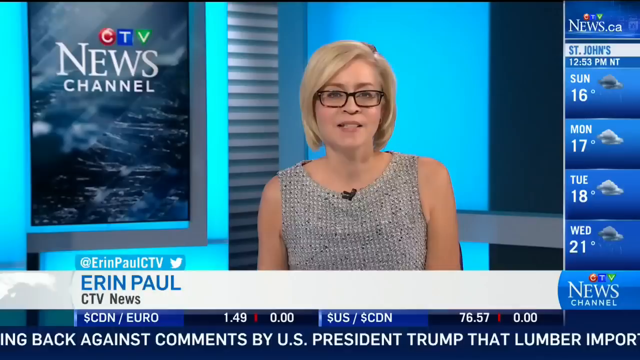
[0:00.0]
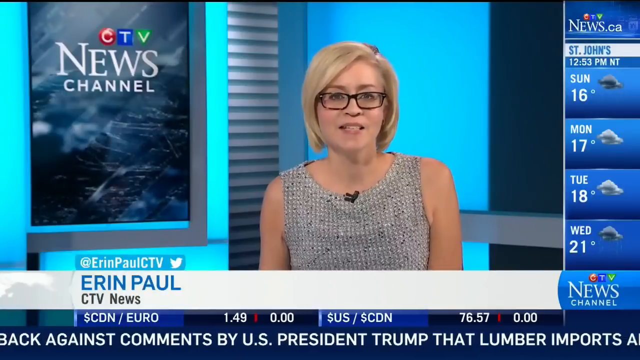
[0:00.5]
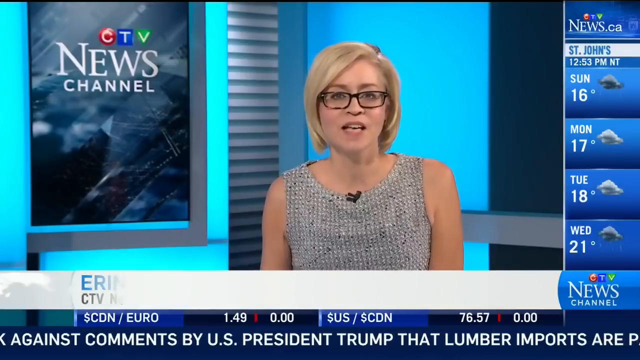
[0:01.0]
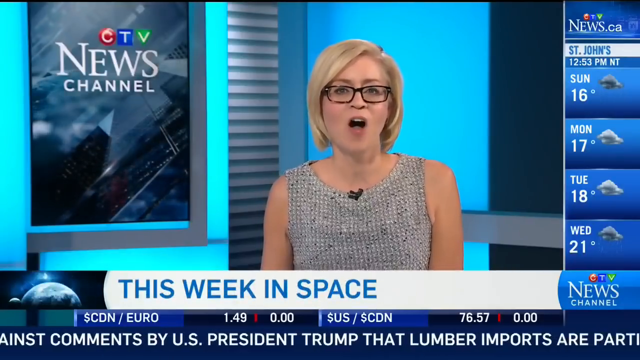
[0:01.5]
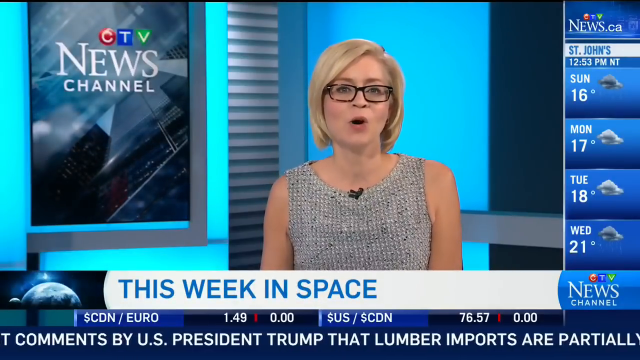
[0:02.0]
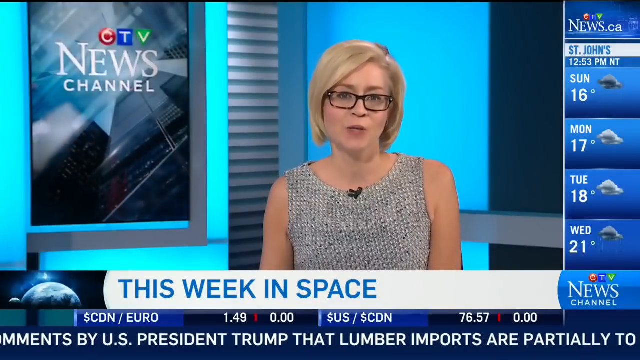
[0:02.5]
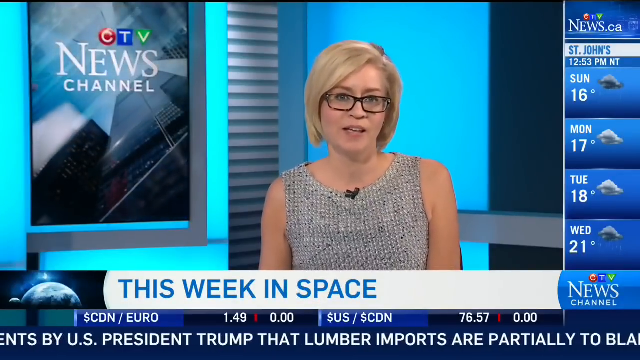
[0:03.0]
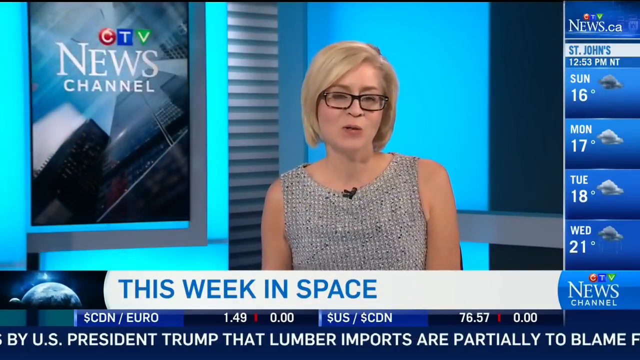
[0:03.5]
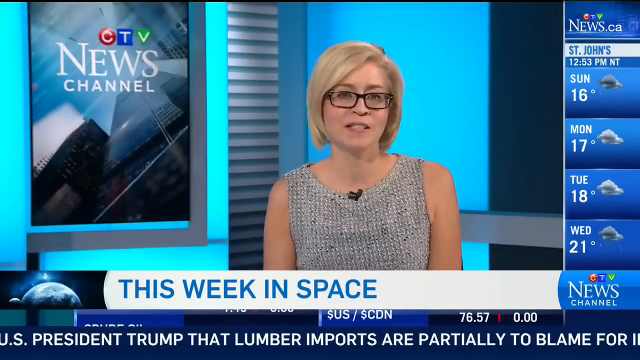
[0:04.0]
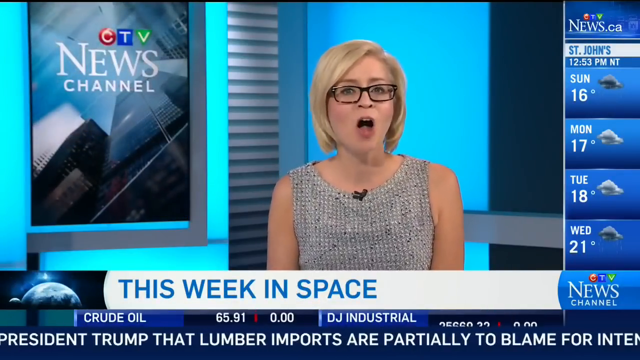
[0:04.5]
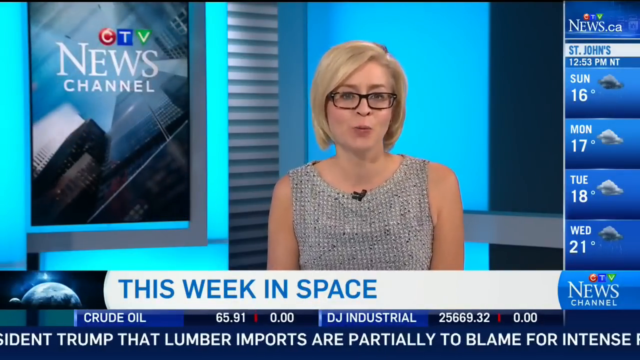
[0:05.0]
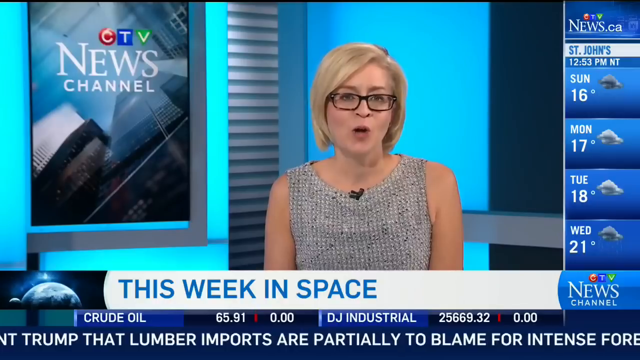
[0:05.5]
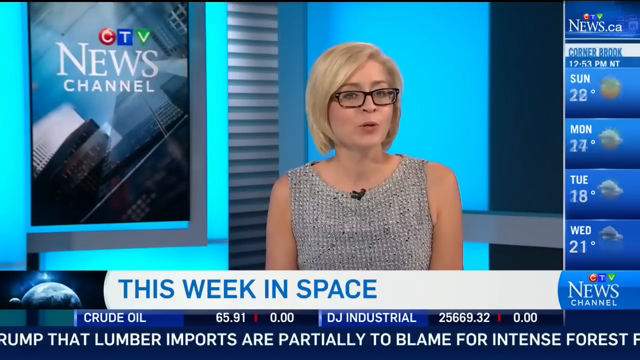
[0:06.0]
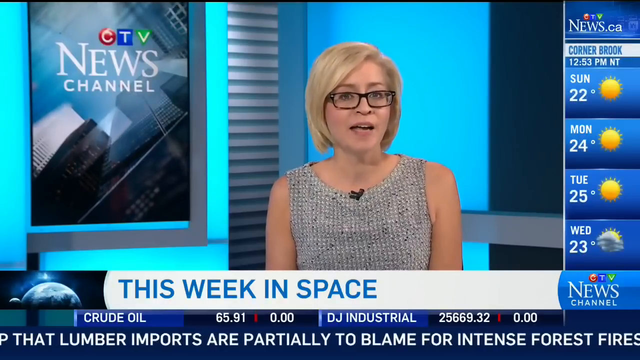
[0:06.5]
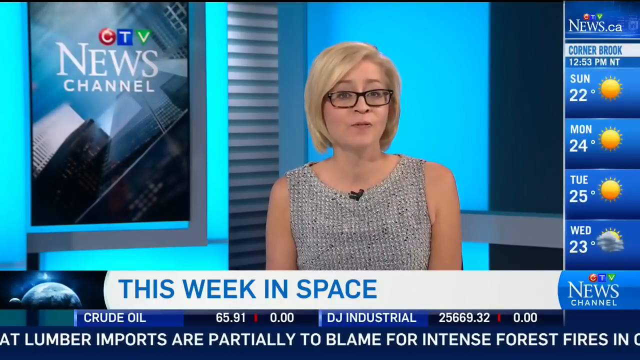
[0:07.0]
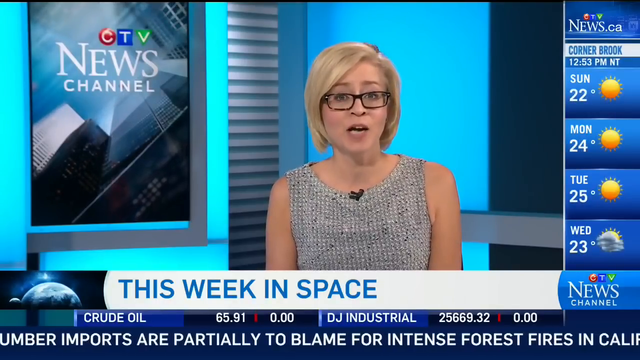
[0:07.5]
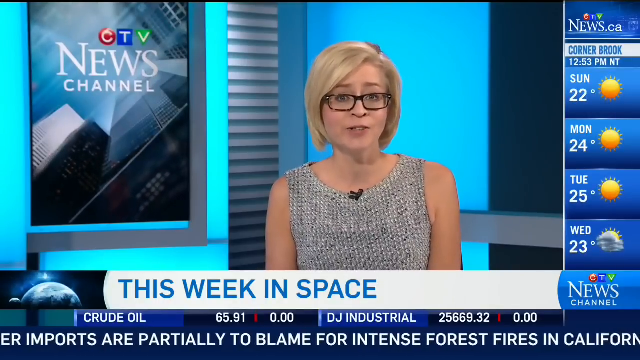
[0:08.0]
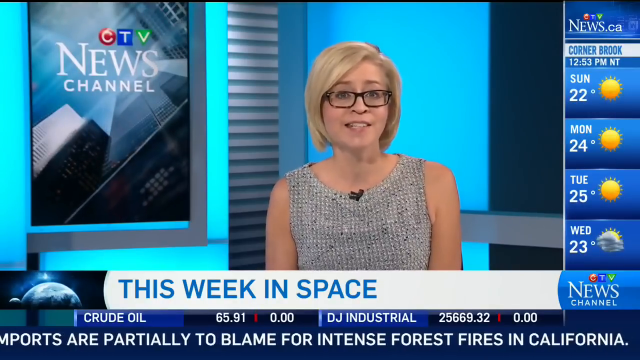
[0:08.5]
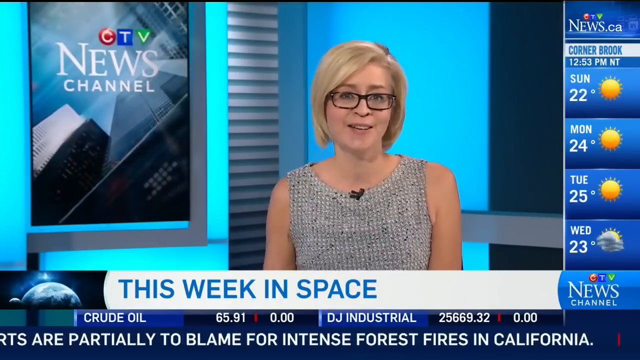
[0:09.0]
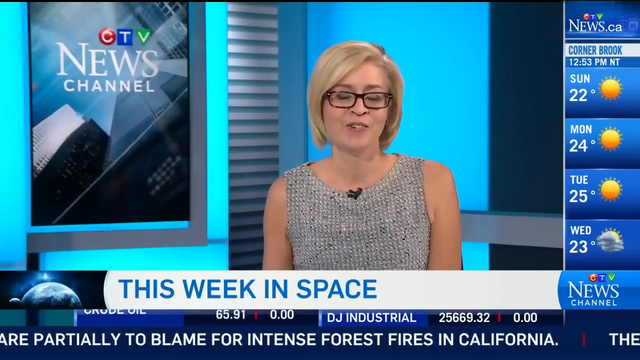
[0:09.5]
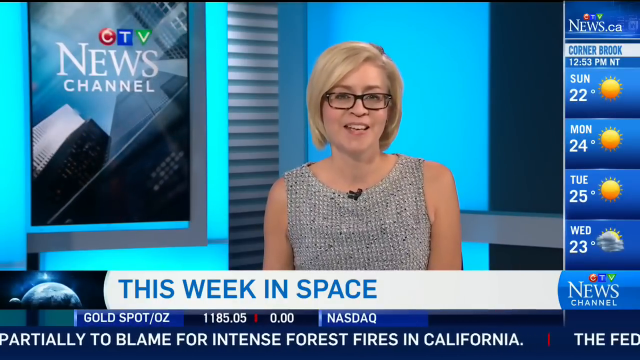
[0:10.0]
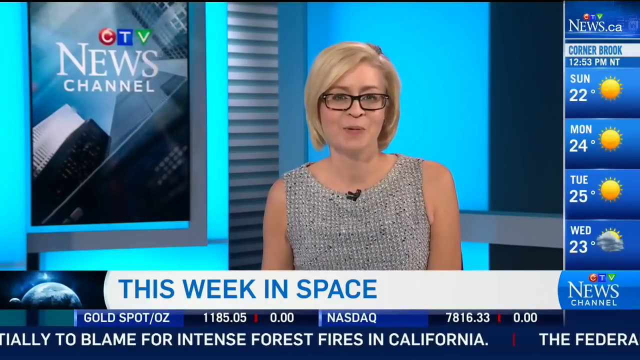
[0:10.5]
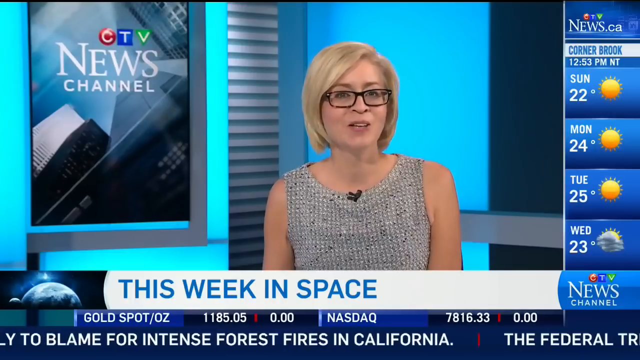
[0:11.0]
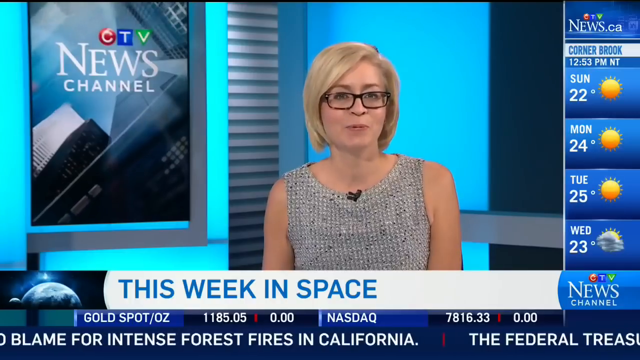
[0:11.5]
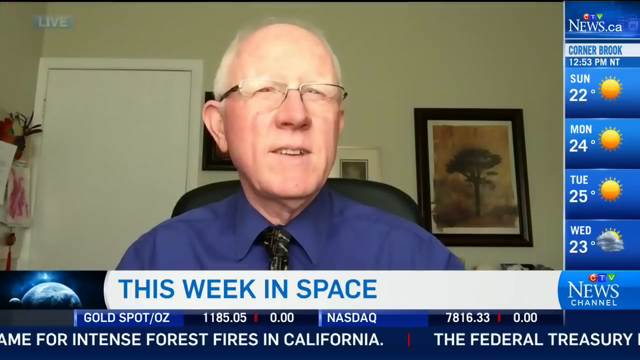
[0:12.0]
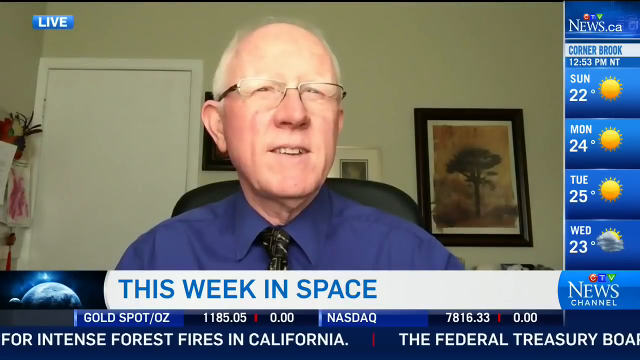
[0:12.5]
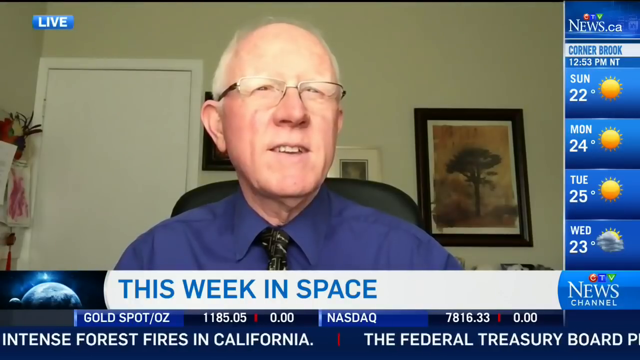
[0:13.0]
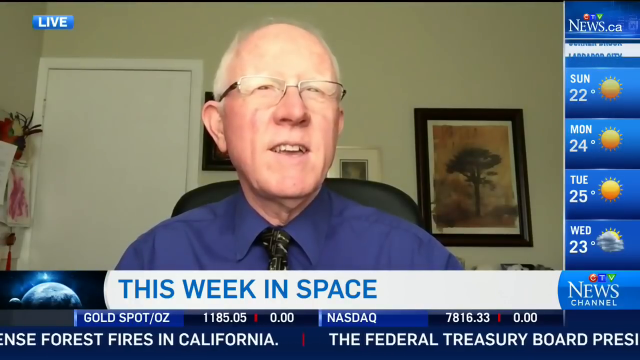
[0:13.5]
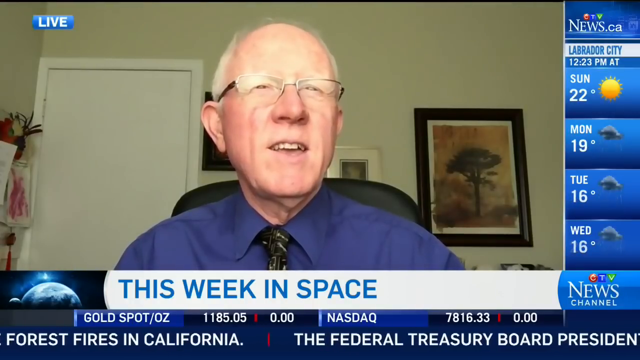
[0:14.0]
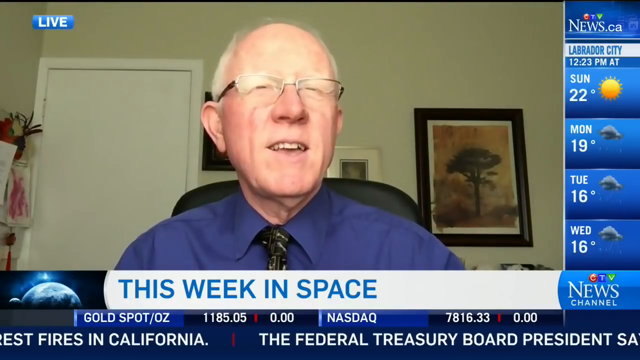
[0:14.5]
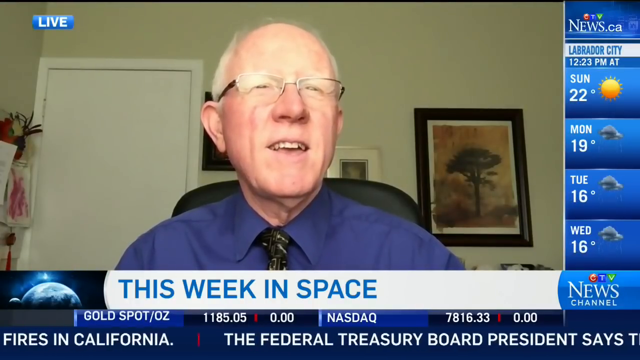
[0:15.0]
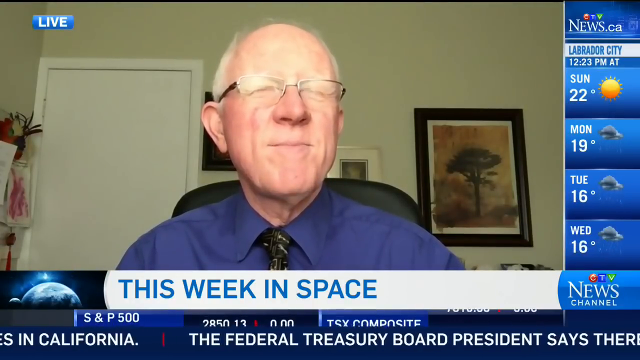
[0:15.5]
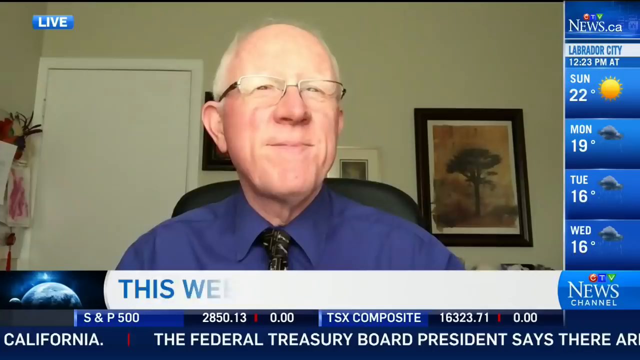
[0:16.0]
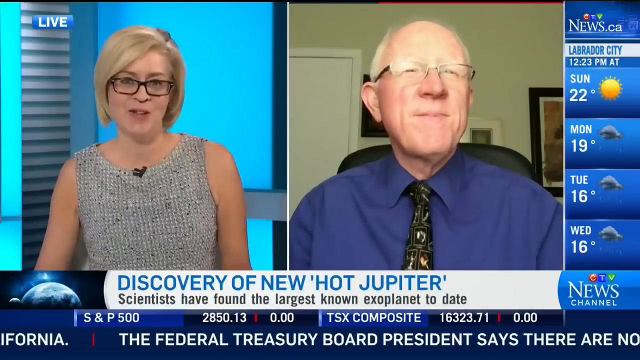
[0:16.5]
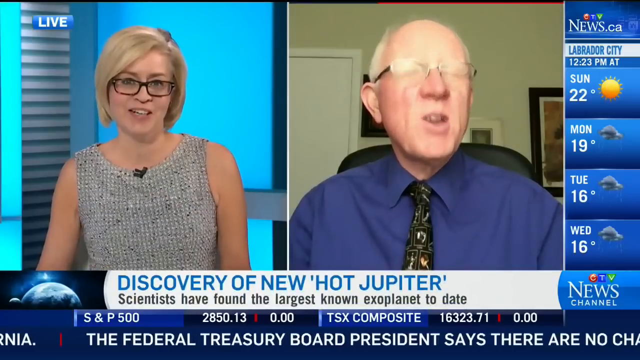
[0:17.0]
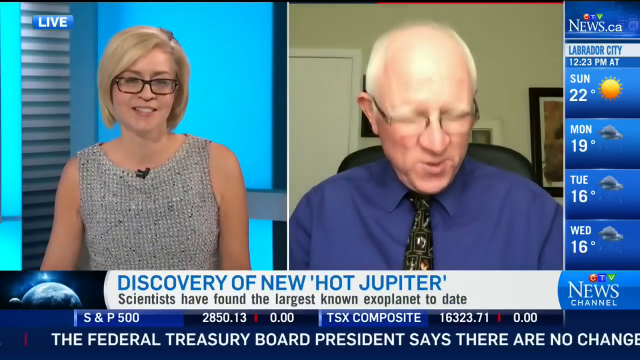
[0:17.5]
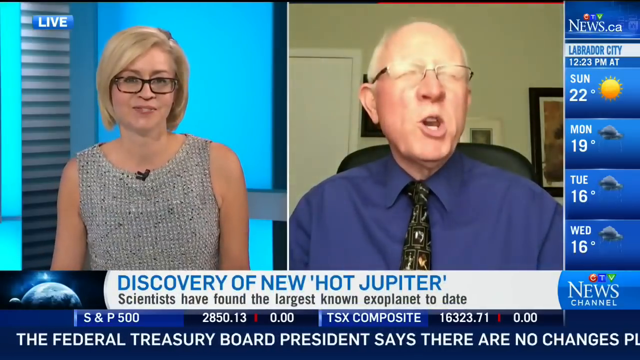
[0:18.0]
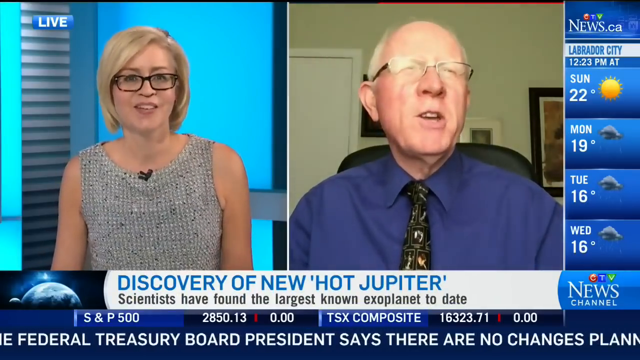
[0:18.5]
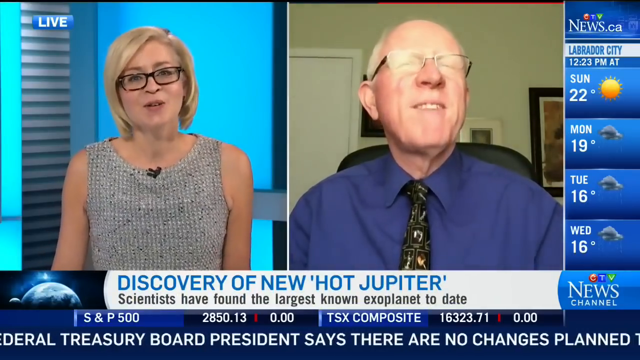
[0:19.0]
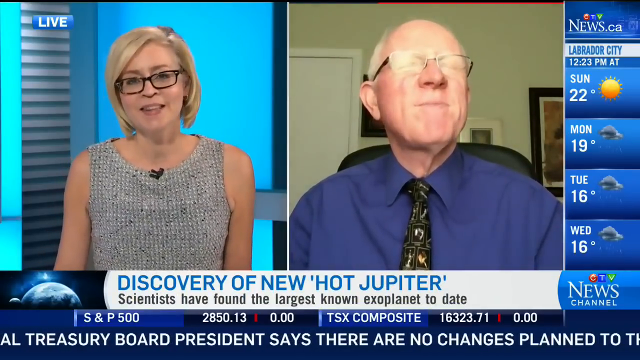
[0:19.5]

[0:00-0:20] The broadcast is CTV News Channel, with an item about this week in space. The presenter in the studio is Erin Paul, a fair-haired woman in a grey sleeveless top who wears dark glasses. A weather forecast for St. John's shows grey conditions: 16 degrees on Sunday, 17 degrees on Monday, 18 degrees on Tuesday and 21 degrees on Wednesday, all grey. The coverage returns to space, with an expert to be interviewed about the discovery of a new hot Jupiter type planet outside the solar system. A news item reports that Canadians are not happy that President Trump is alleging Canadian lumber imports are the cause of intense forest fires in California. Another item begins saying that the Federal Treasury Board President says there are no changes planned.